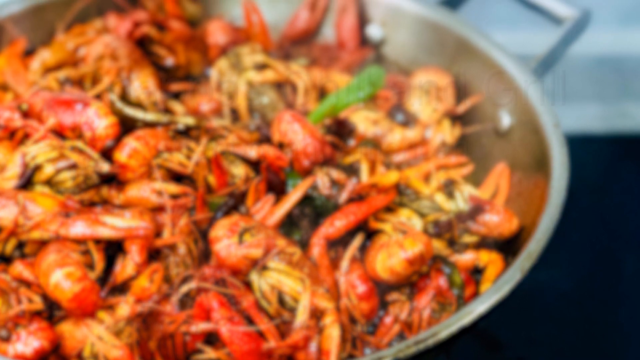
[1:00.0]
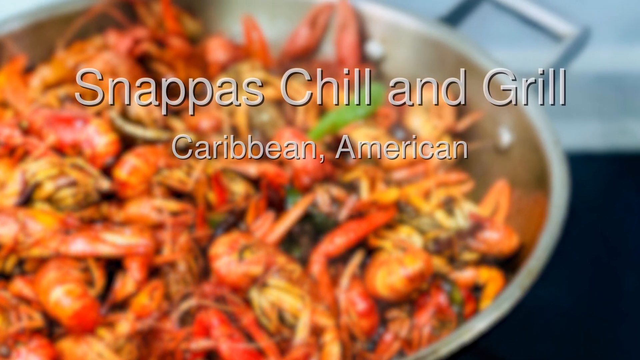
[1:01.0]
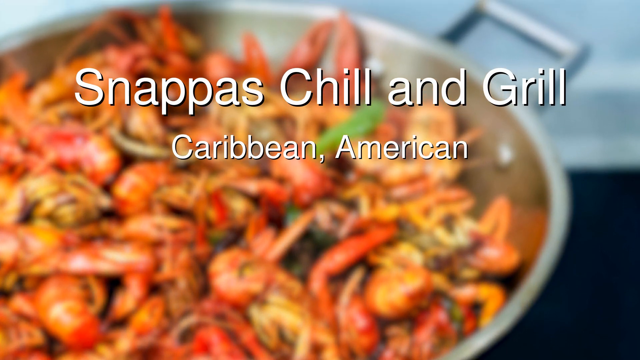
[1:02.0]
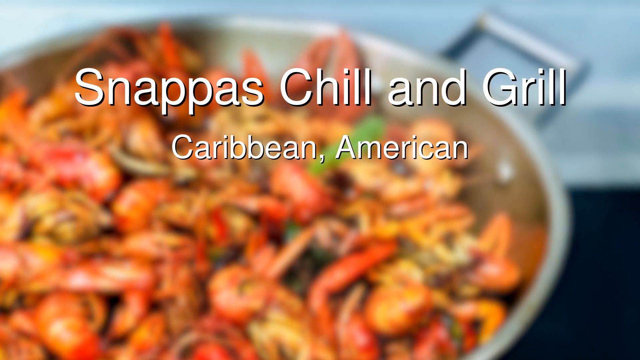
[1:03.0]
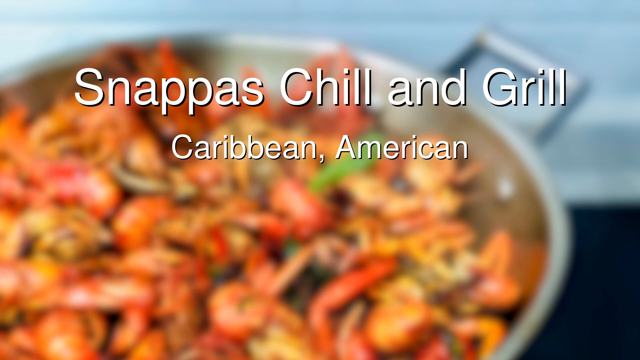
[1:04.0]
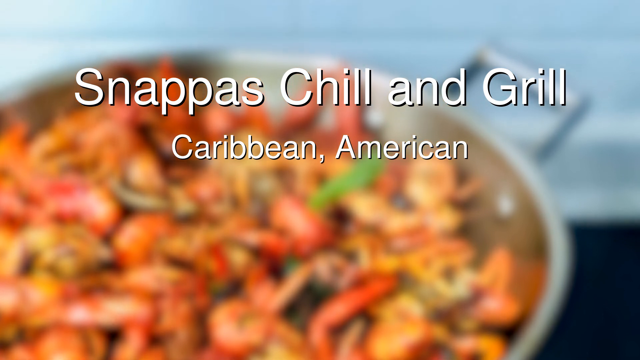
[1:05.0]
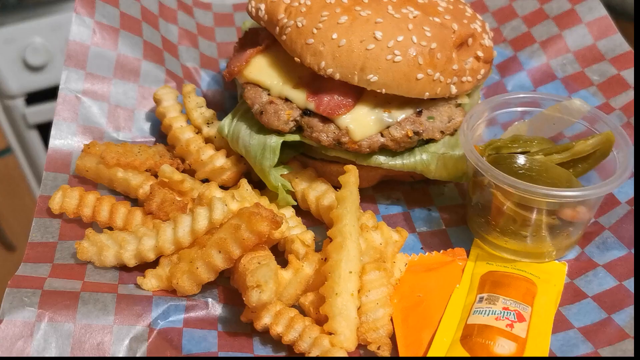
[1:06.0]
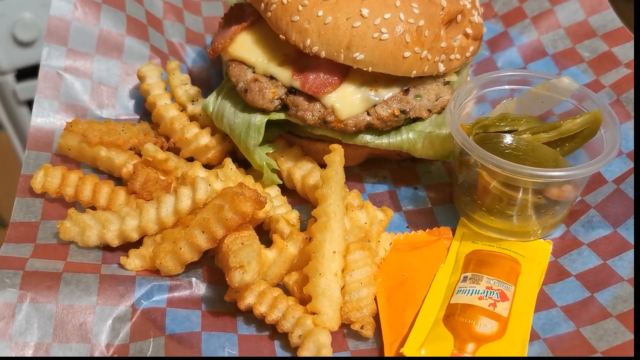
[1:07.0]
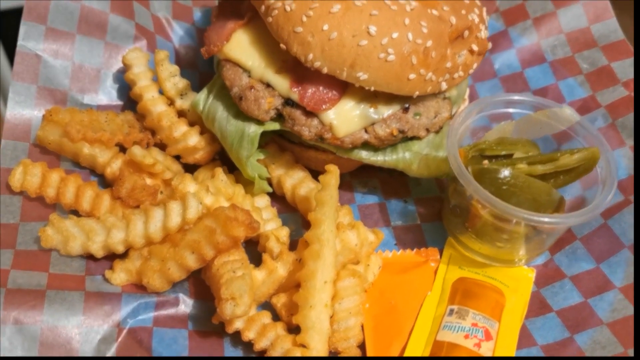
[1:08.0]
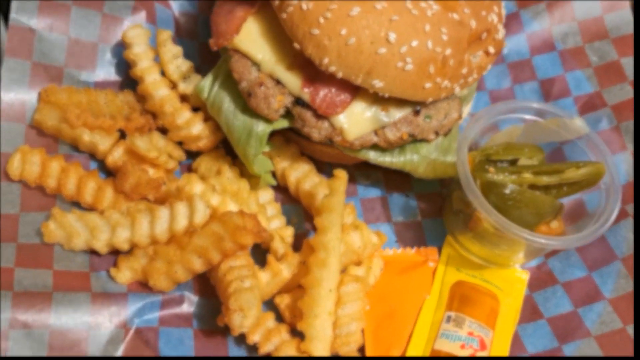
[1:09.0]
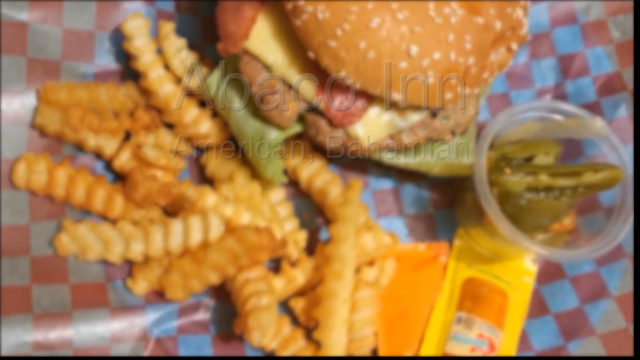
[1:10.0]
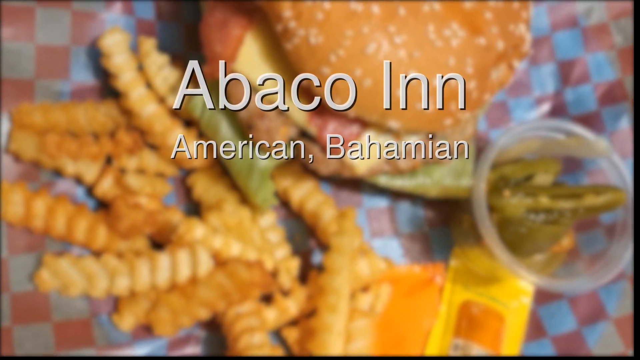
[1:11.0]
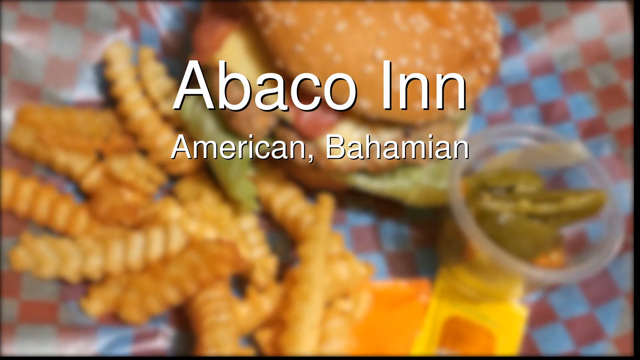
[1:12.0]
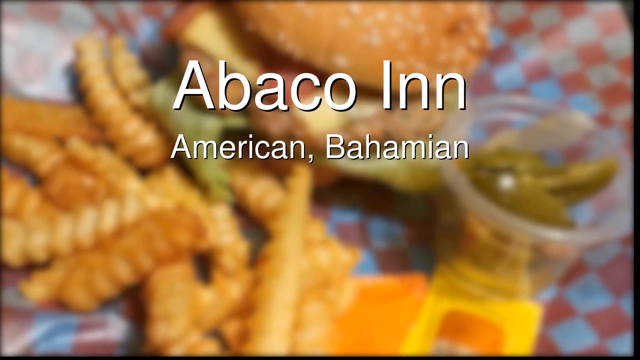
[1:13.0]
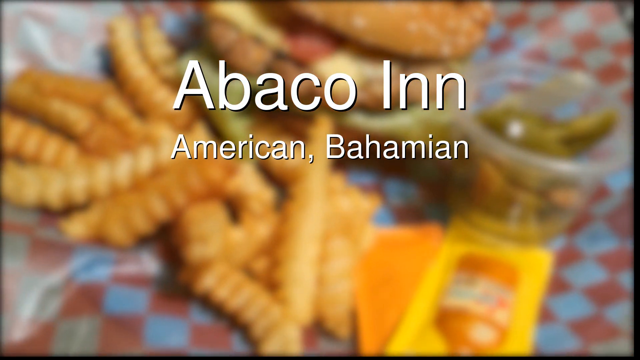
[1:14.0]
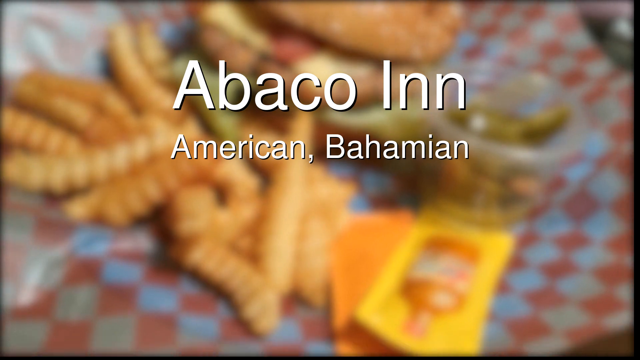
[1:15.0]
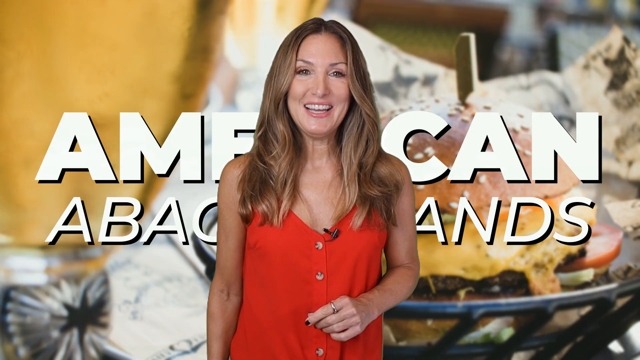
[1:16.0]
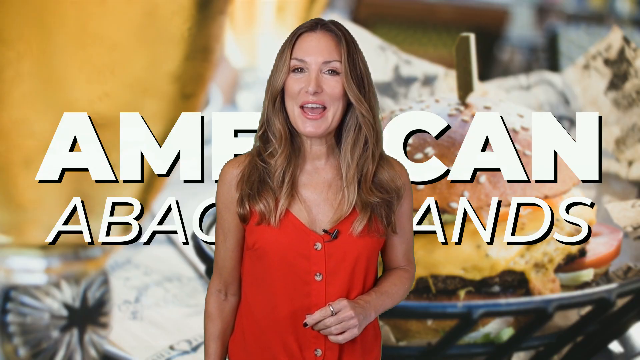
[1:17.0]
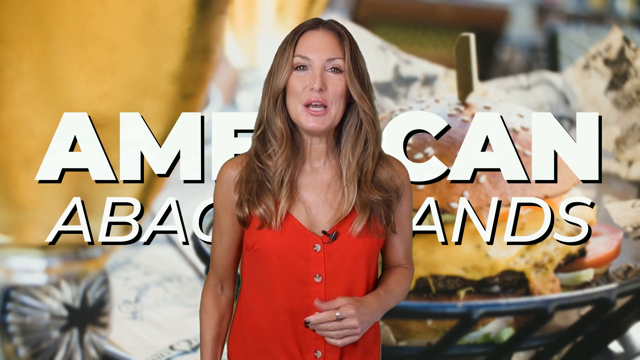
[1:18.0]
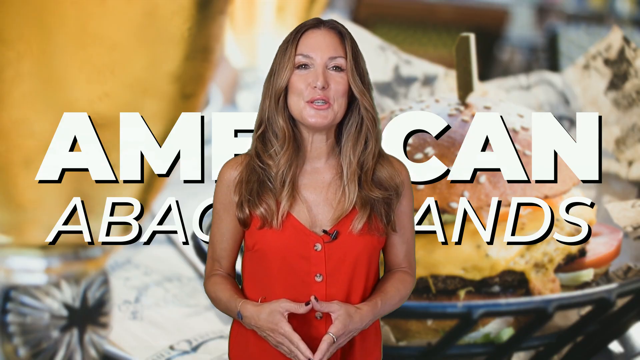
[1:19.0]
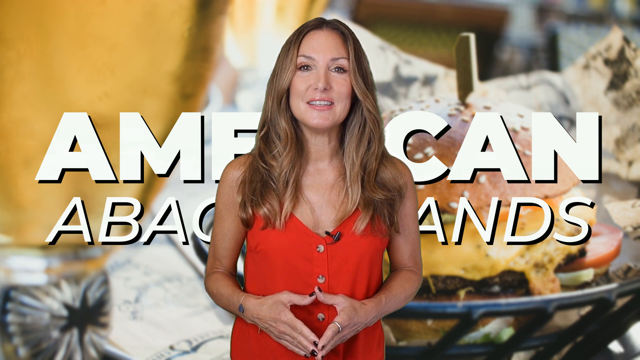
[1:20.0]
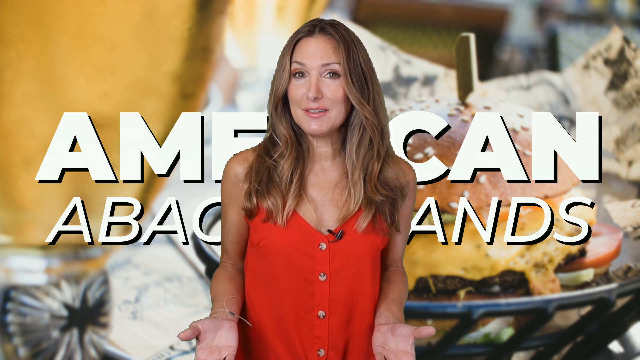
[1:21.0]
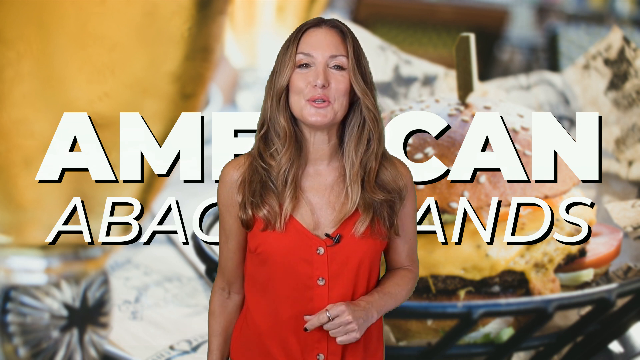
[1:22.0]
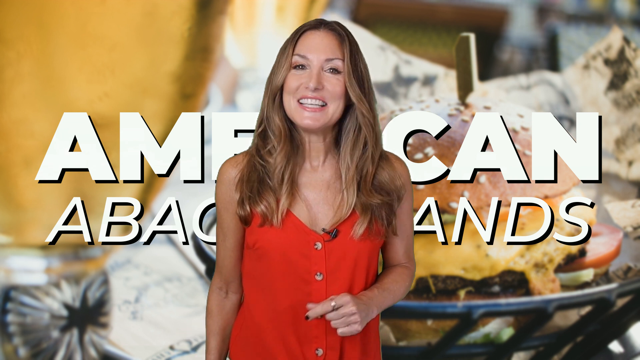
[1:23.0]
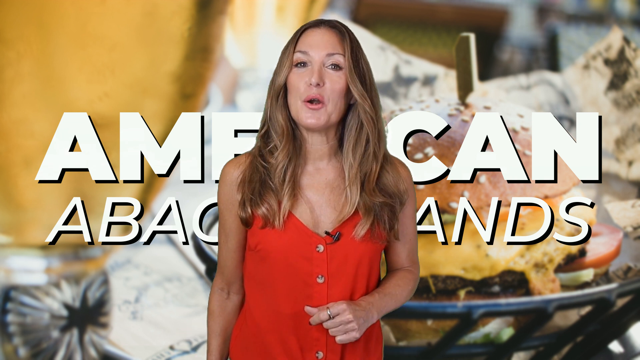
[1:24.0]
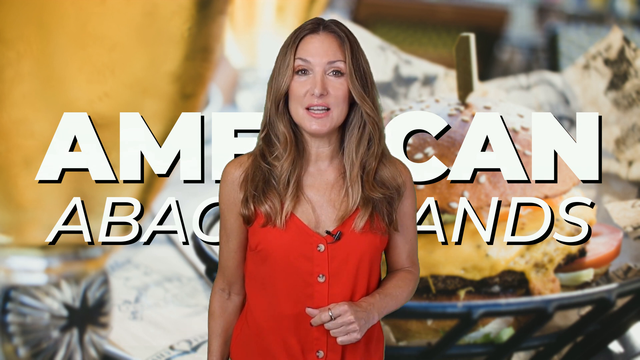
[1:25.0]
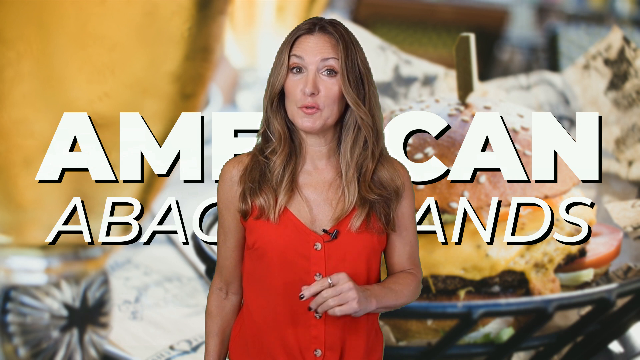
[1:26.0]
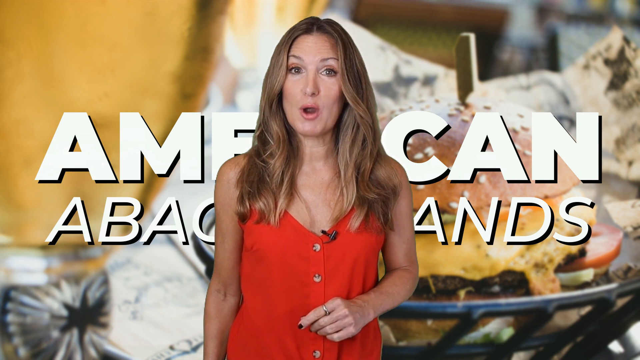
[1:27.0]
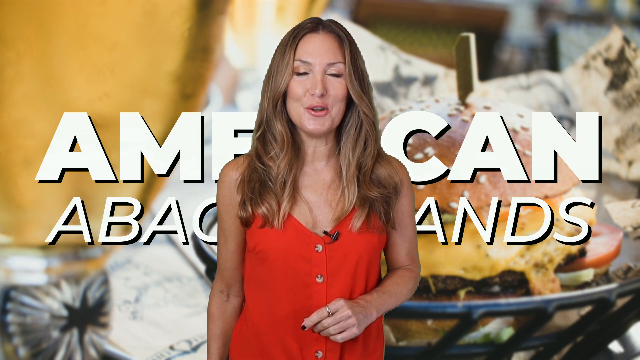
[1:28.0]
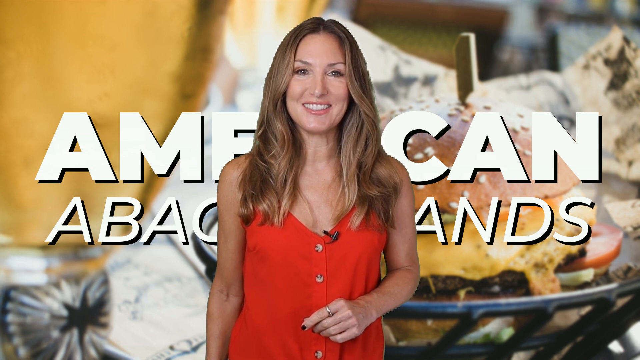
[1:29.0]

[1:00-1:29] The camera pans upward over the photo, and the image of the large pot of crawfish blurs out, overlaid with white text that reads "Snap is chill and grill Caribbean American." The video then switches to footage of what looks to be American food: a hamburger on a sesame bun served with a small handful of crinkle-cut fries and maybe some pickled jalapenos, on red and white checkered wax paper. The hamburger looks like it has cheese and another topping that is red but not tomato. The image blurs and text appears ending in "American Bahamian." The footage sort of blurs, and then the same woman from the beginning of the video appears, with text that looks like it reads "American Abaco Islands."